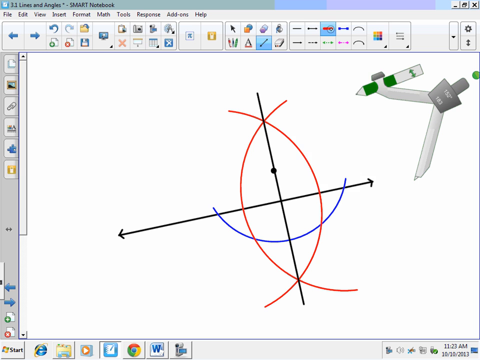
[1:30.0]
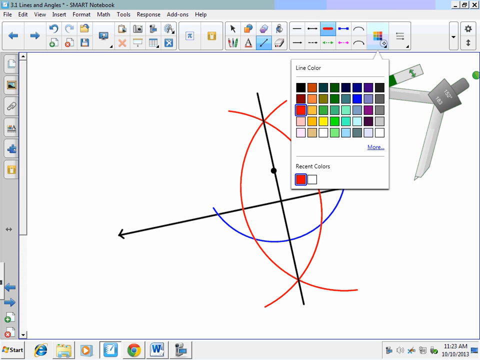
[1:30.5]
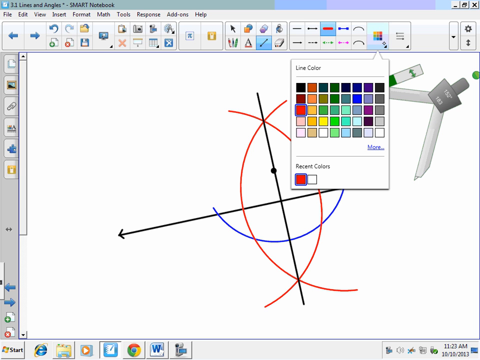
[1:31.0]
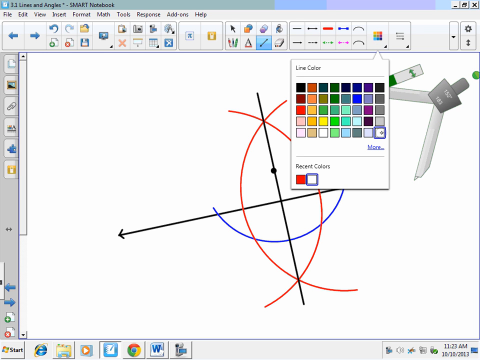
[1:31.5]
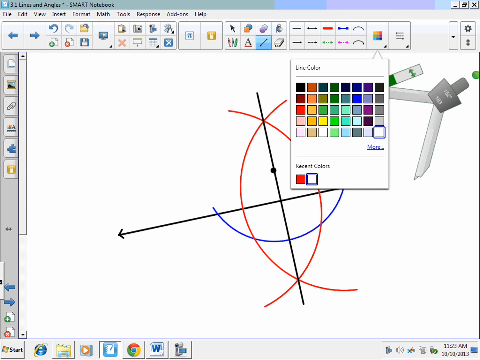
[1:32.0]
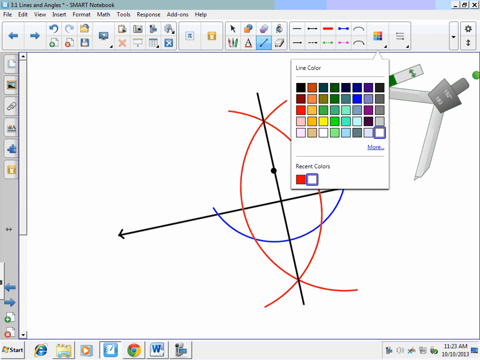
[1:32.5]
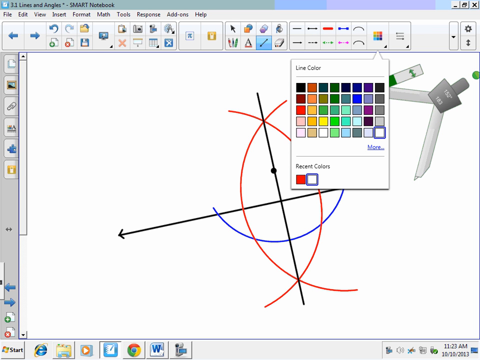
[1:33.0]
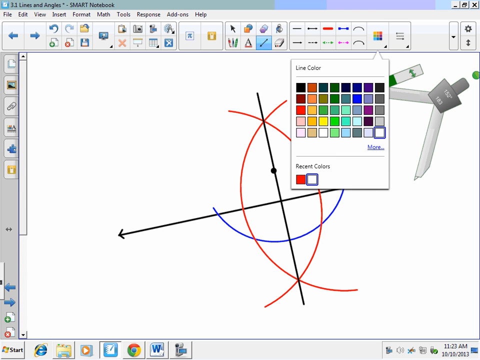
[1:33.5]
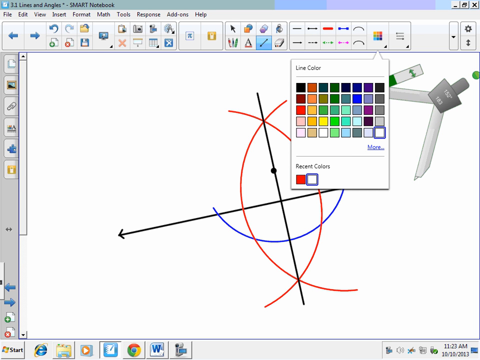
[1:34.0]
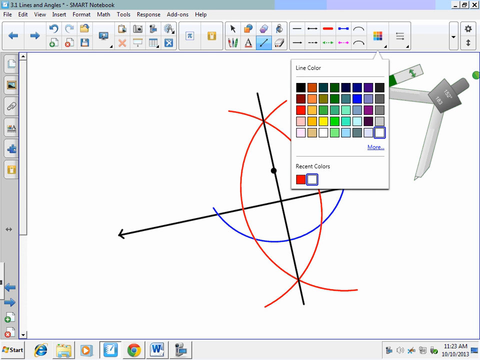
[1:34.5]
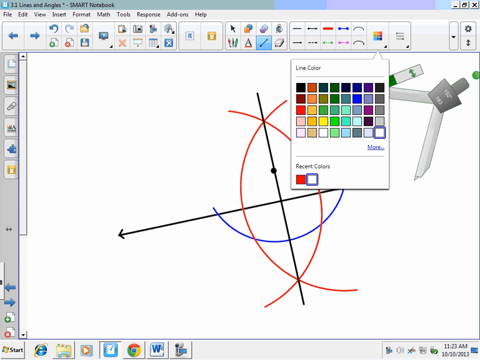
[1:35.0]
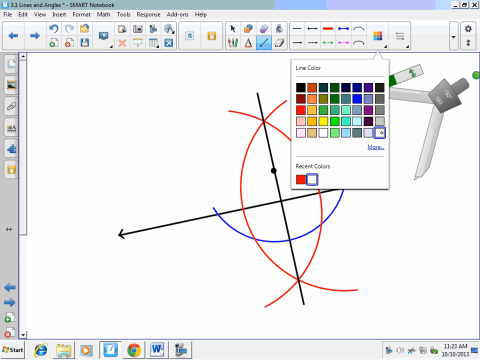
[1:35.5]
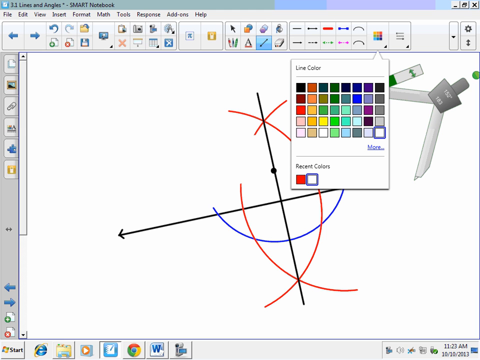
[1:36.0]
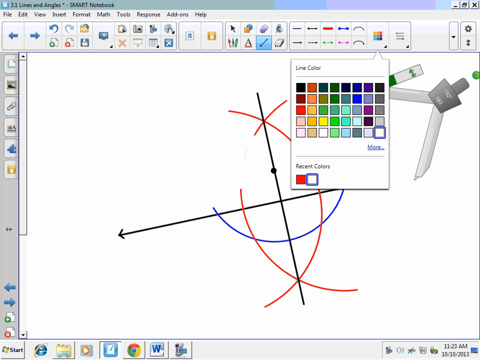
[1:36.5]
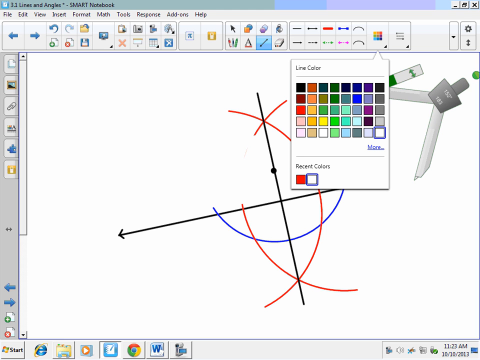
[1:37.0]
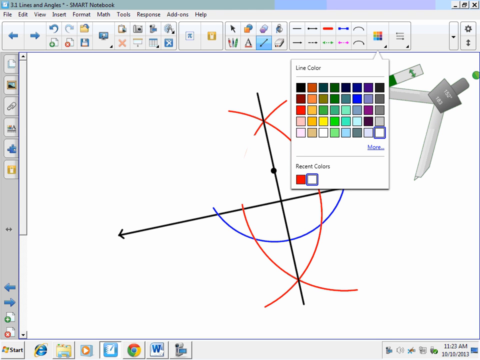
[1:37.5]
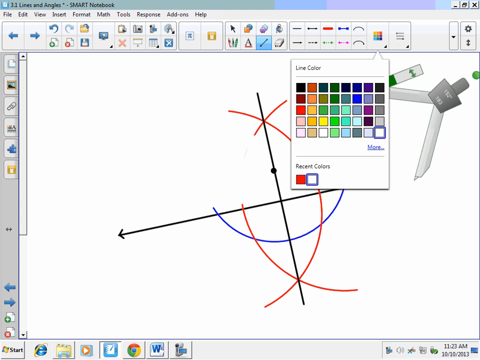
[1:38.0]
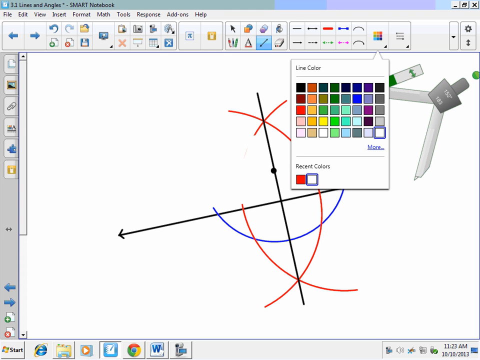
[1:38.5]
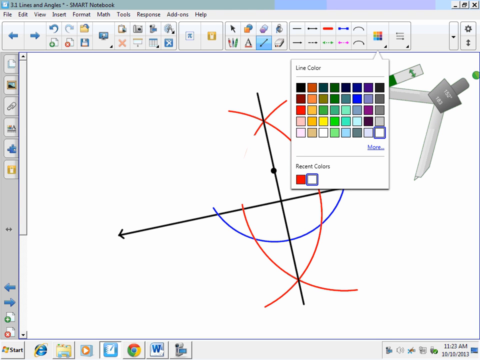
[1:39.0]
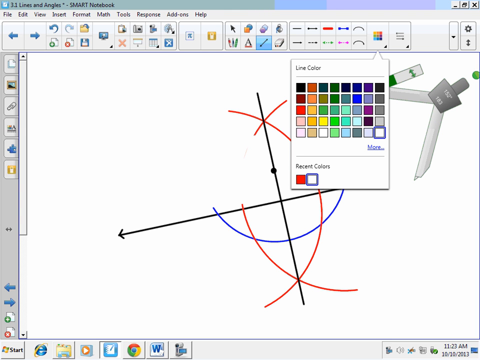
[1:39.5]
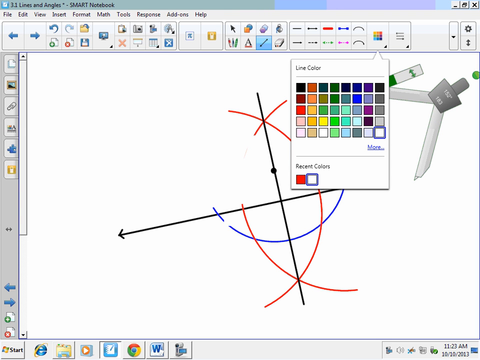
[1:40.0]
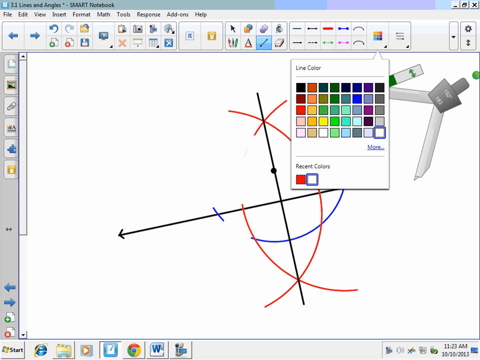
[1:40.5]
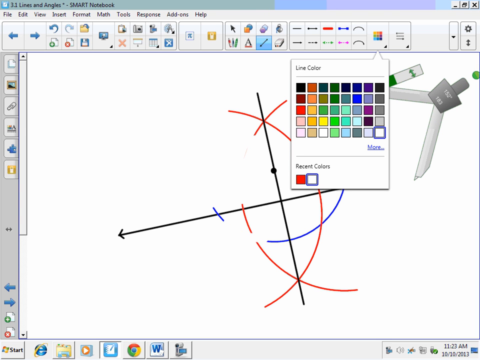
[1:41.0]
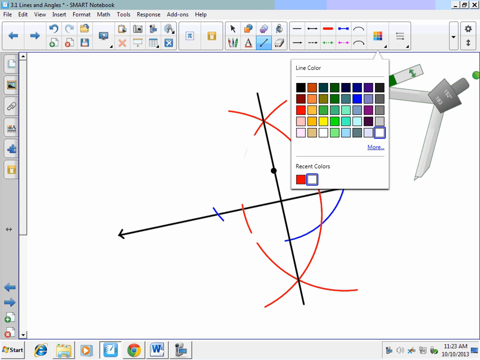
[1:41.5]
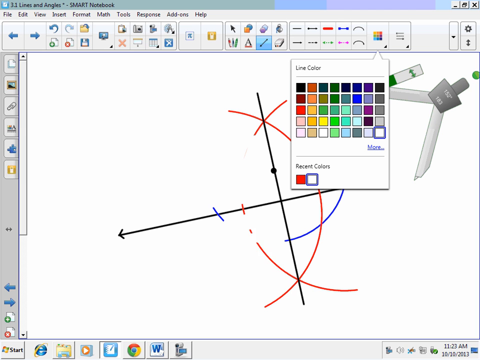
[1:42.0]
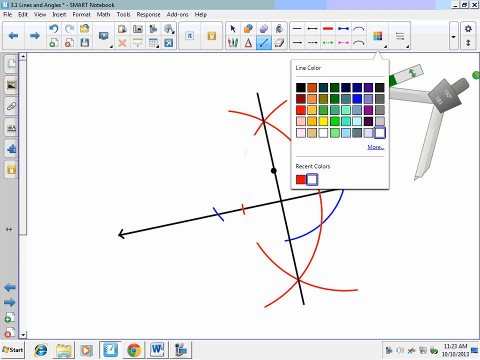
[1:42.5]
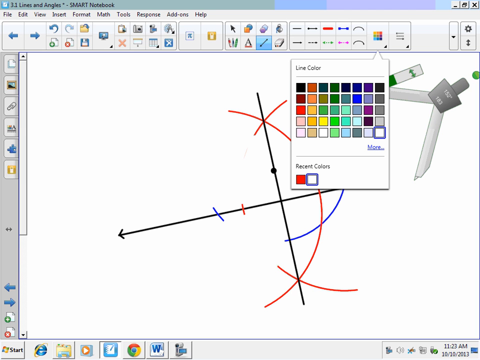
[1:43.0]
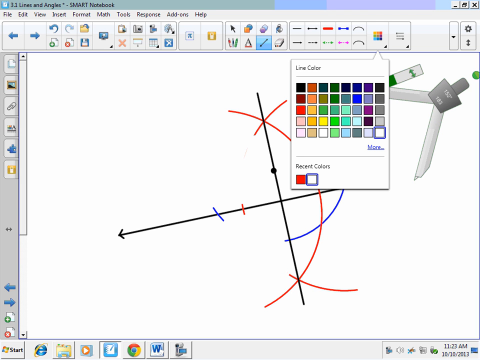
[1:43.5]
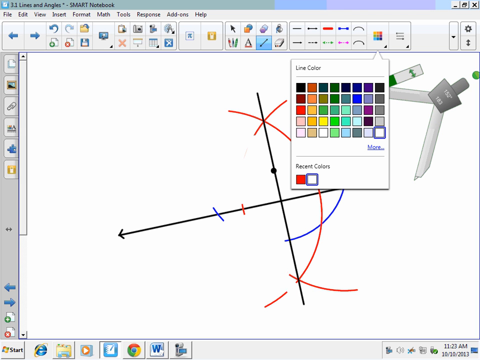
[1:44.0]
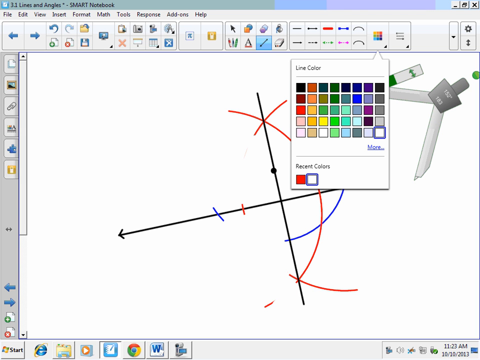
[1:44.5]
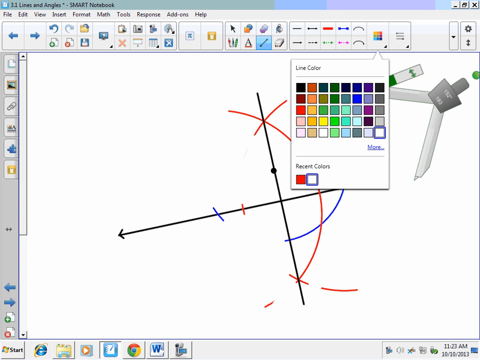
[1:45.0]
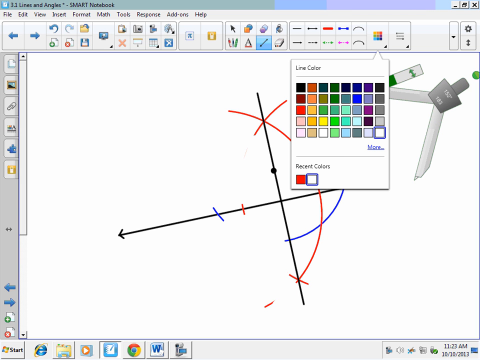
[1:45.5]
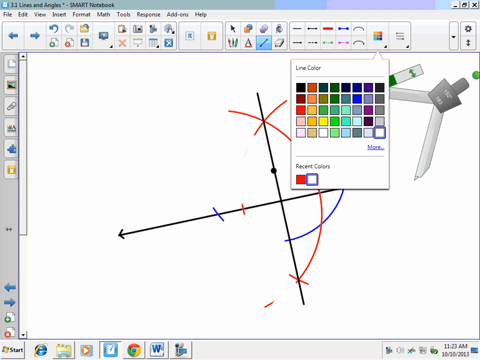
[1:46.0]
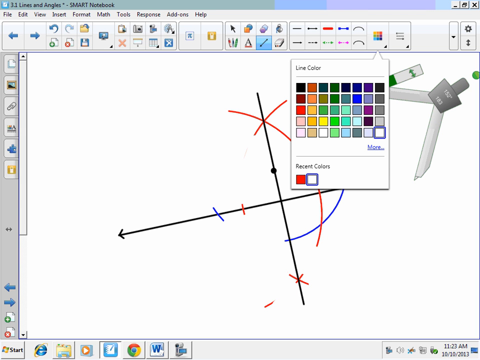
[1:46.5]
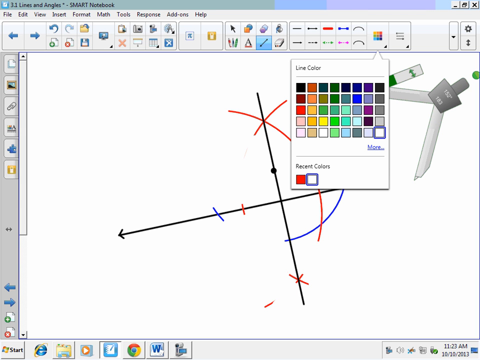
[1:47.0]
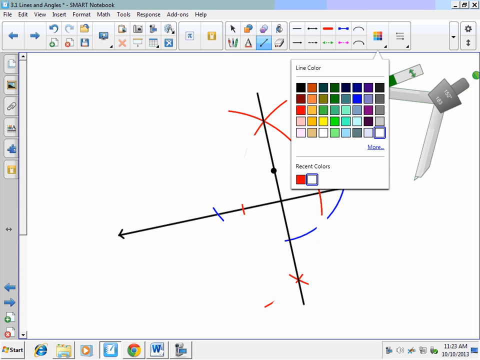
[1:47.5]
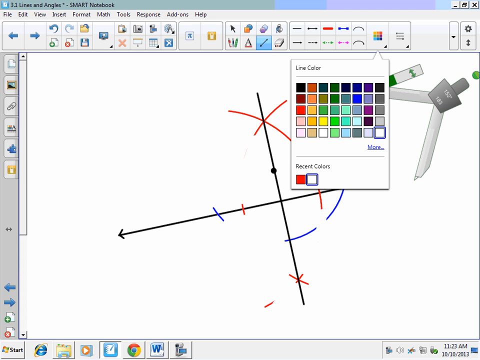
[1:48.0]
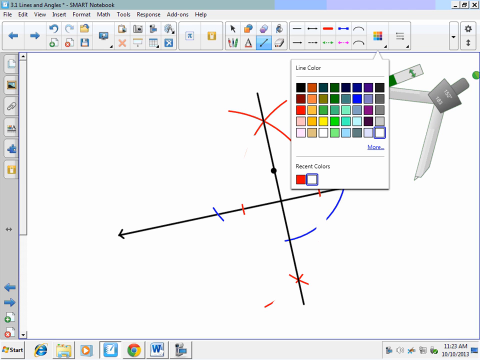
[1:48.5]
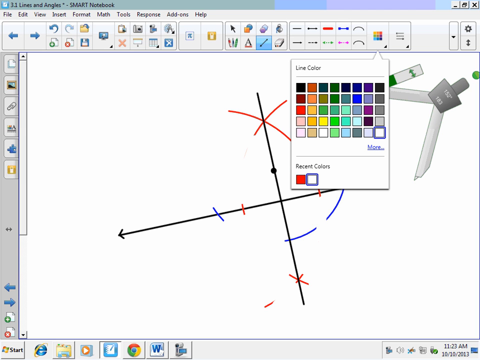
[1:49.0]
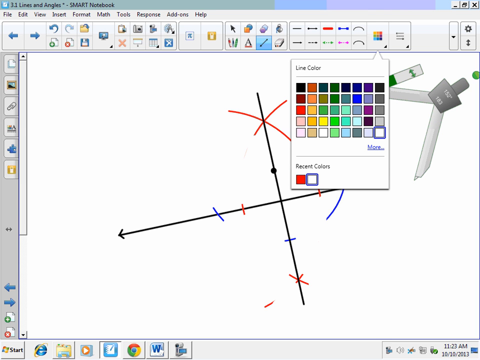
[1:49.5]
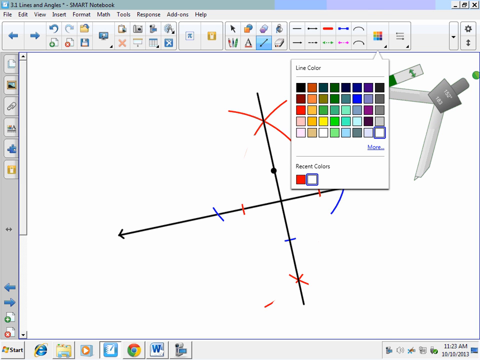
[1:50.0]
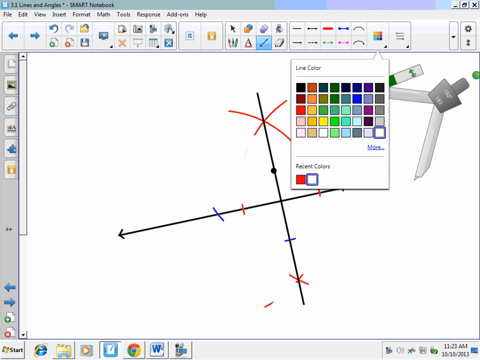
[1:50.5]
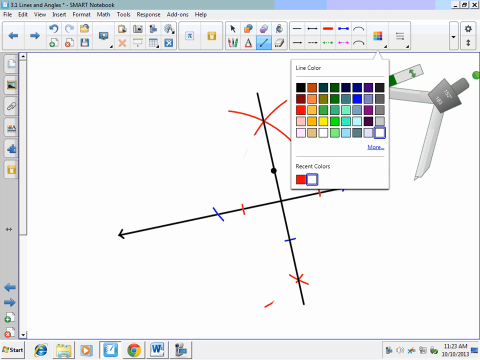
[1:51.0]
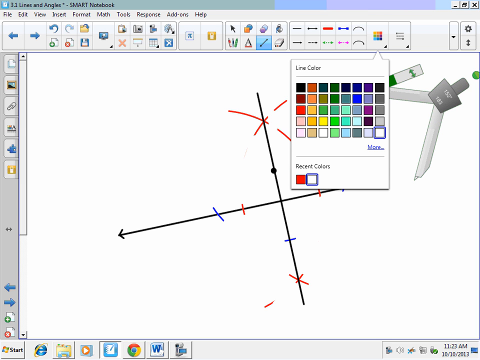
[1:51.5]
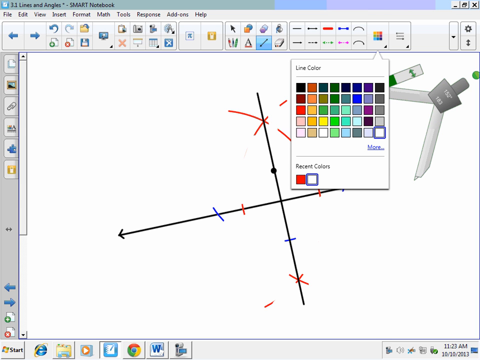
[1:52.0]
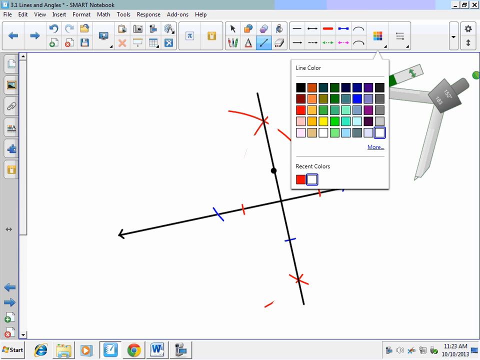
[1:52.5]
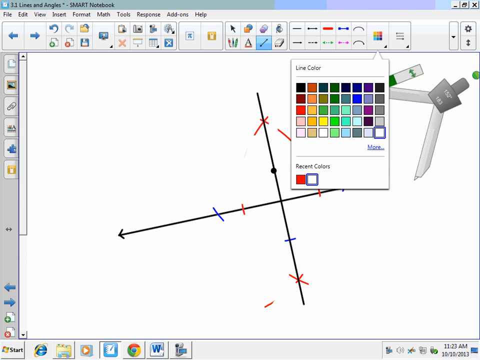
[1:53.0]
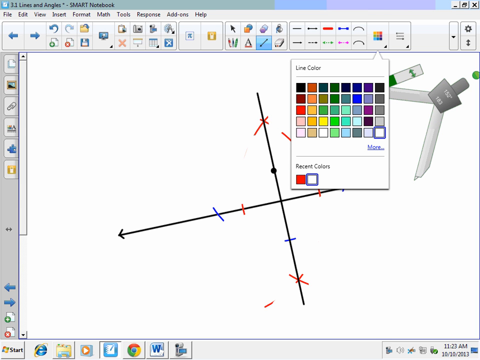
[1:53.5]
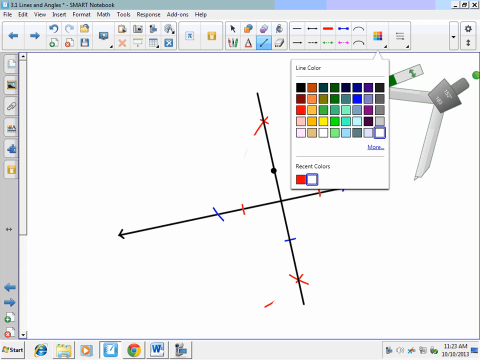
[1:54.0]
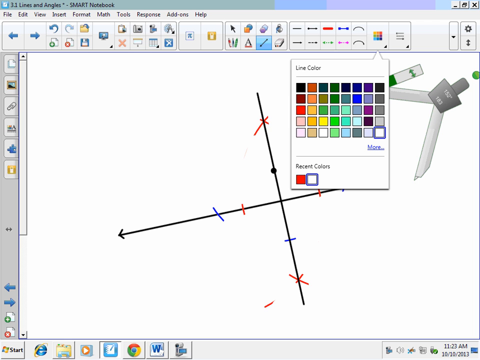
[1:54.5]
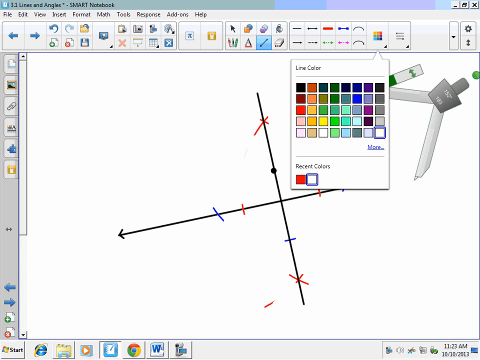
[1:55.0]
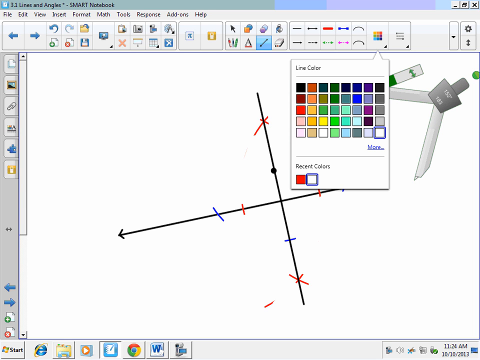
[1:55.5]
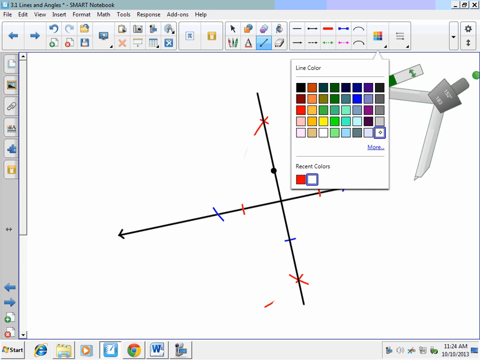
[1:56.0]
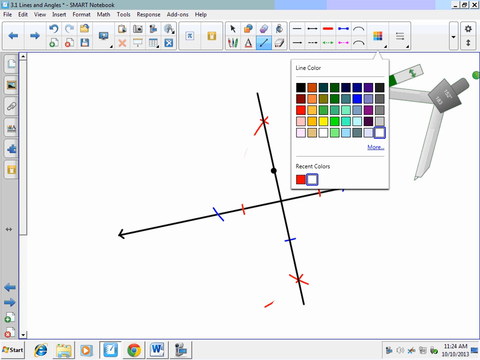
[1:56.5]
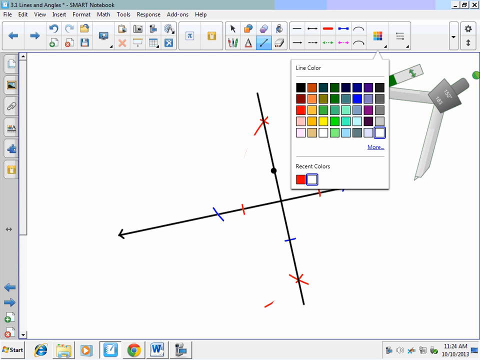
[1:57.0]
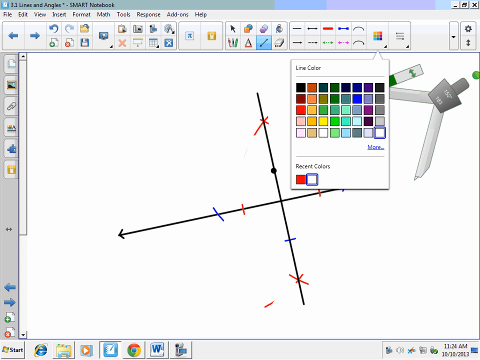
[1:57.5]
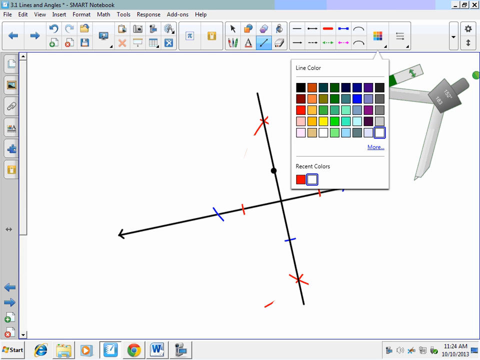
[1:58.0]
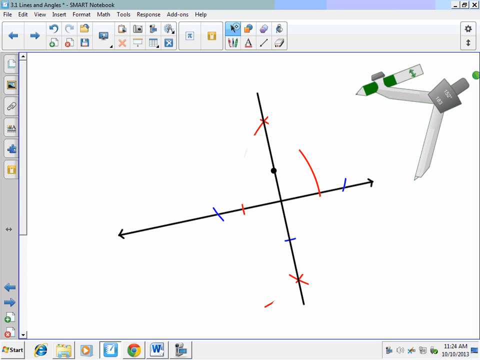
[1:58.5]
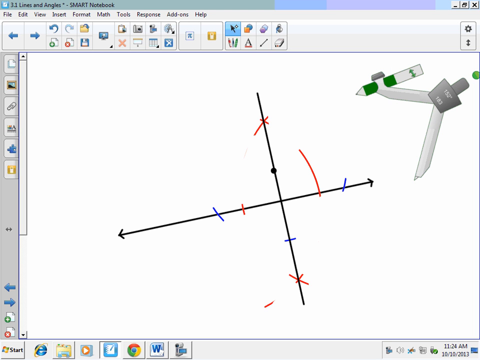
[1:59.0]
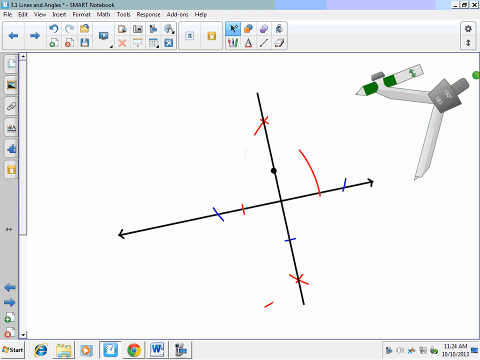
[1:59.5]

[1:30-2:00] The notepad has a dot, a line, a blue semicircle, two red semicircles that intersect, and a line crossing through the intersection. An option to pick colors for the lines is shown; the line color is in the red box and is then switched to the white box. It is then selected, and parts of the red semicircle are erased, and similarly a little of the blue semicircle. The part where the red and blue intersect is erased as well, and then more of the red is erased until barely anything is left and only the edges are kept. The same is repeated on the other side, with the red erased first and then the blue, and then up top as well. The only markings left are where the red intersected on the horizontal line and where the blue intersected on the horizontal line; everything else is erased, but the straight line drawn through the two points where the red intersected remains.